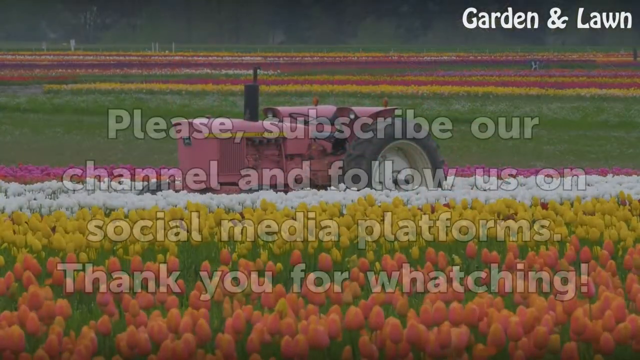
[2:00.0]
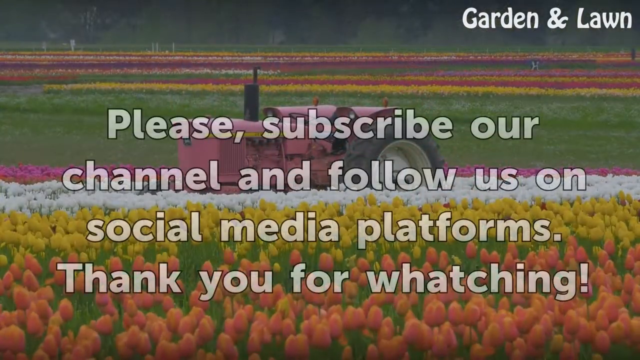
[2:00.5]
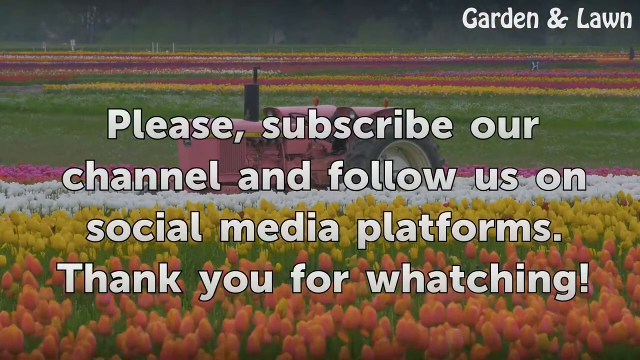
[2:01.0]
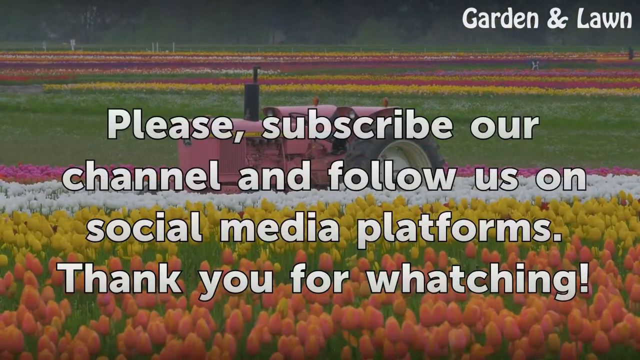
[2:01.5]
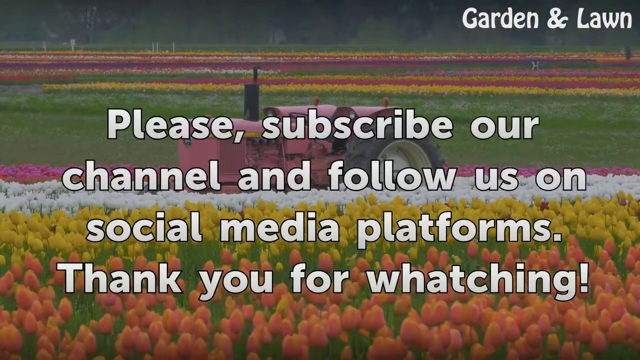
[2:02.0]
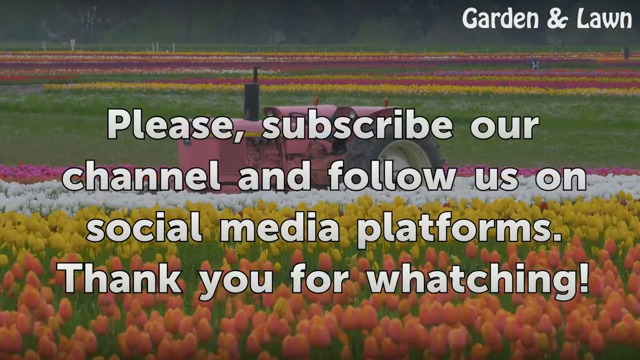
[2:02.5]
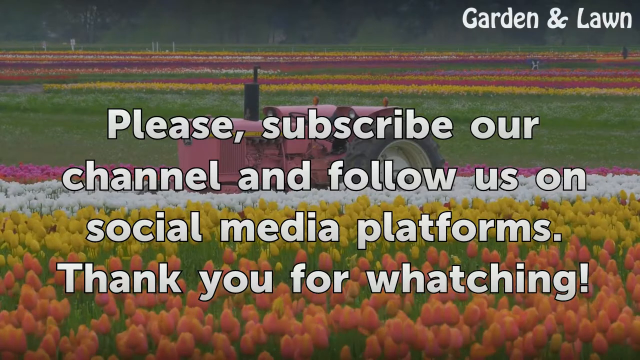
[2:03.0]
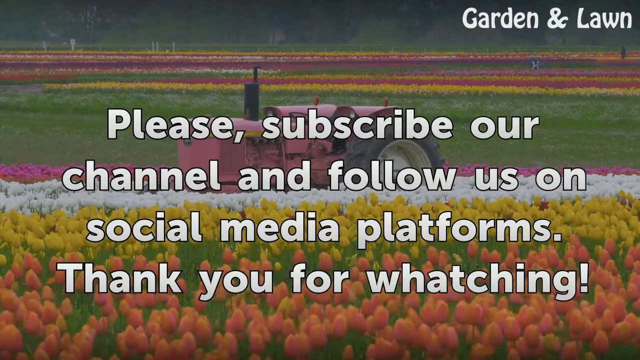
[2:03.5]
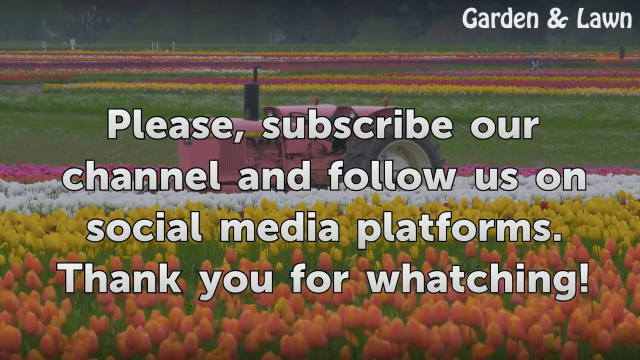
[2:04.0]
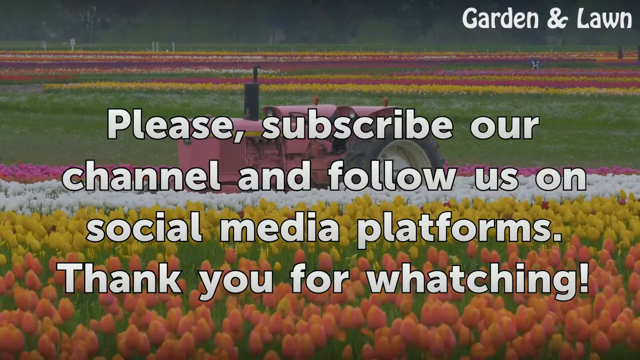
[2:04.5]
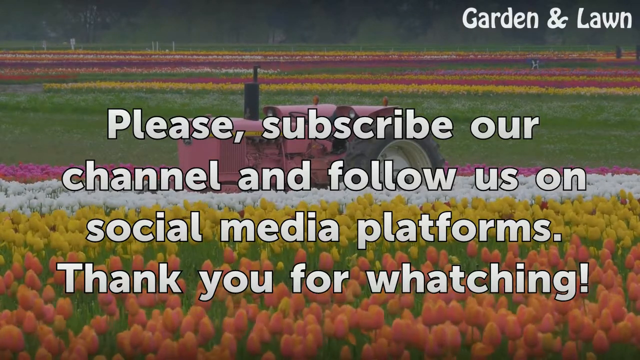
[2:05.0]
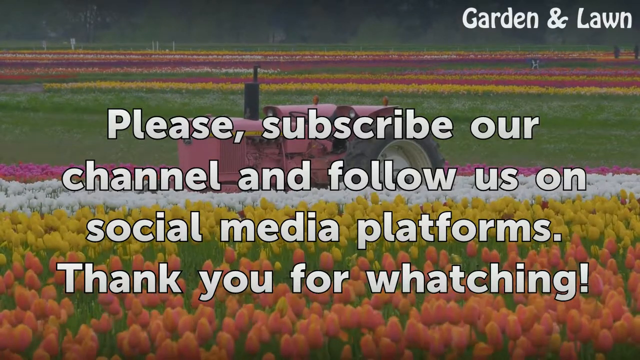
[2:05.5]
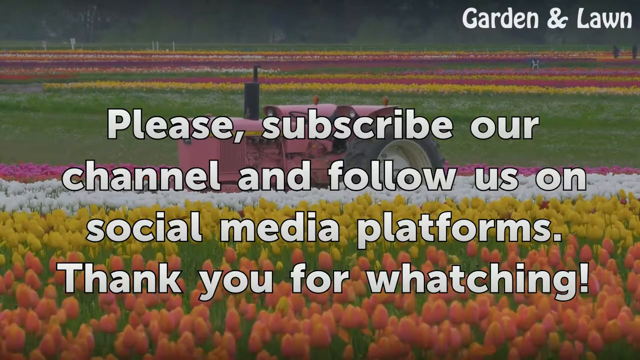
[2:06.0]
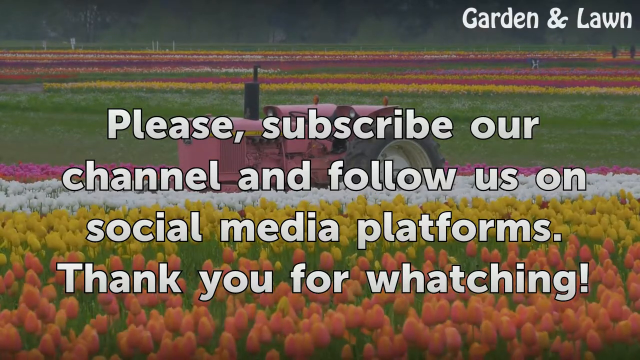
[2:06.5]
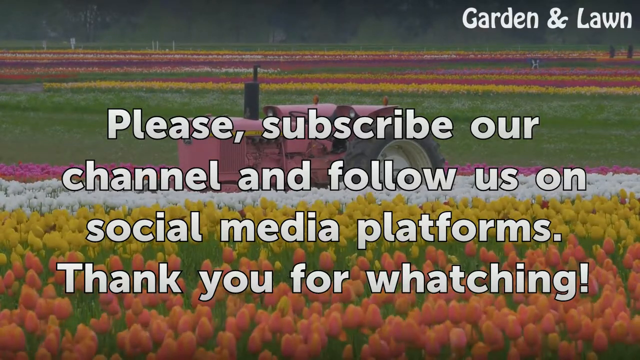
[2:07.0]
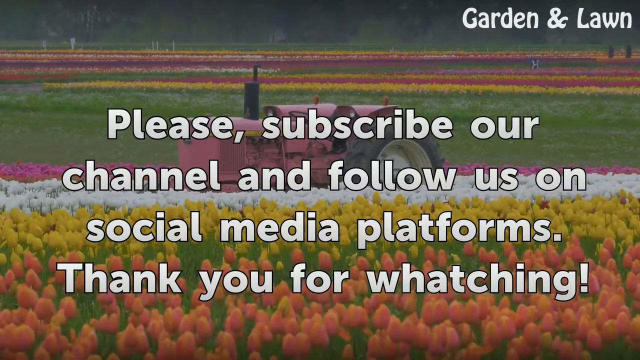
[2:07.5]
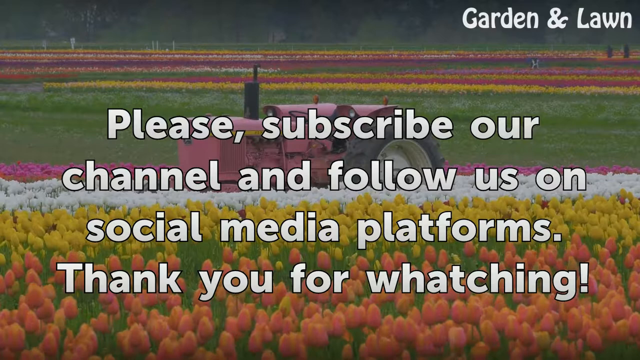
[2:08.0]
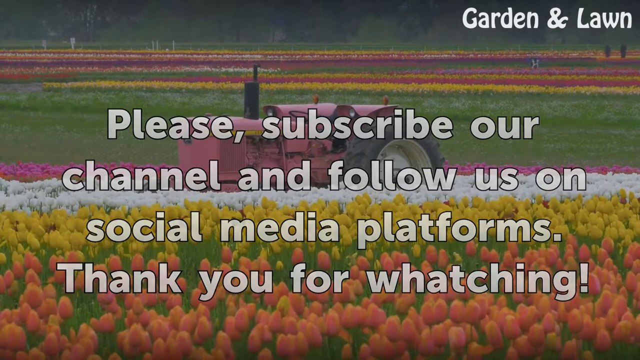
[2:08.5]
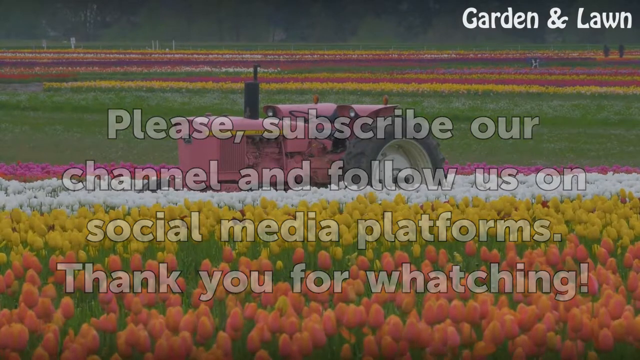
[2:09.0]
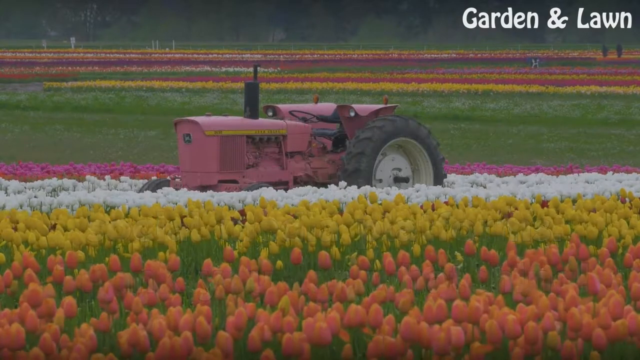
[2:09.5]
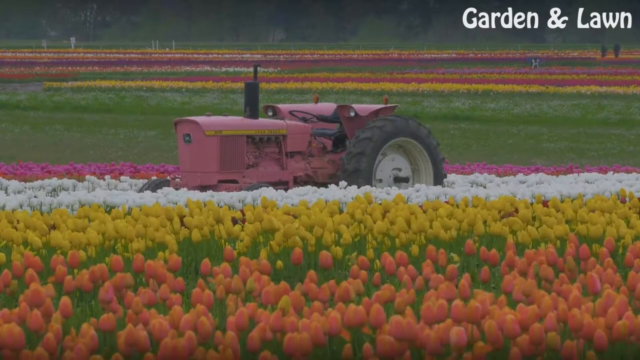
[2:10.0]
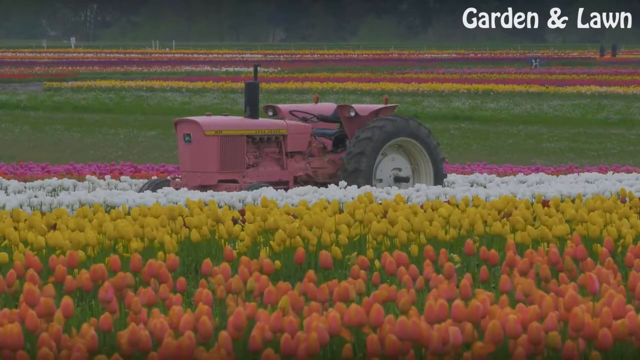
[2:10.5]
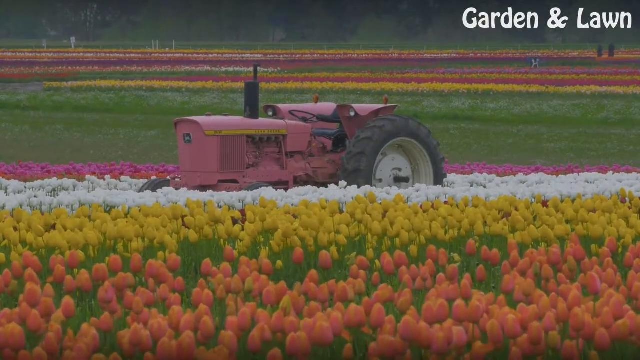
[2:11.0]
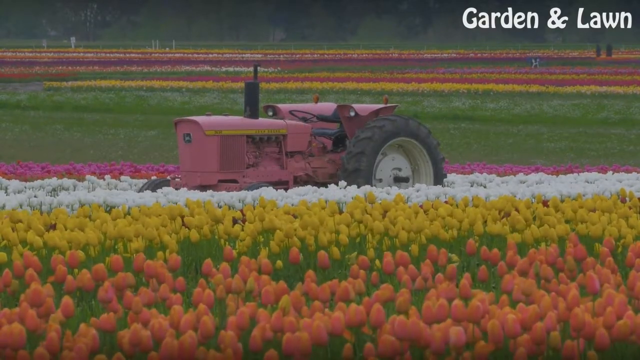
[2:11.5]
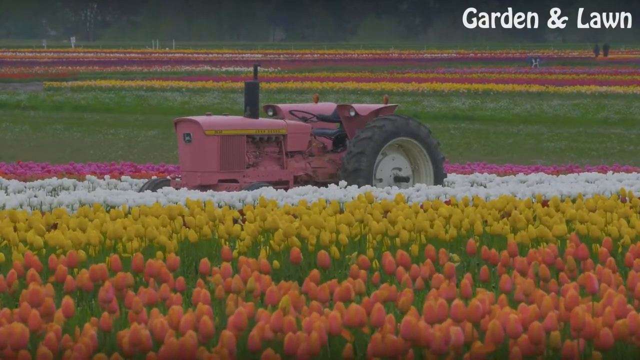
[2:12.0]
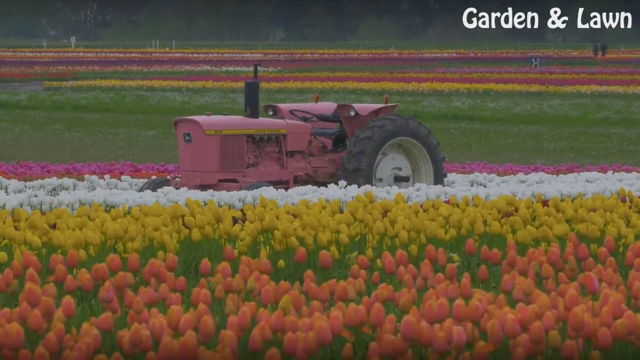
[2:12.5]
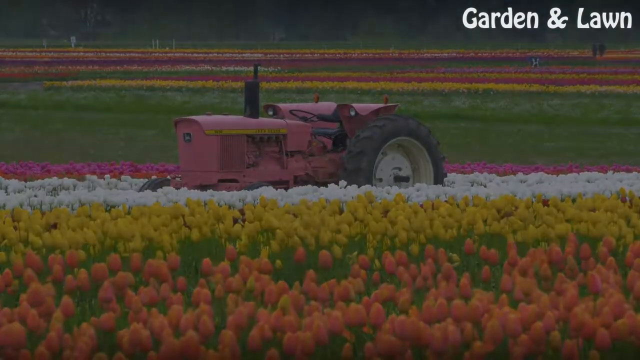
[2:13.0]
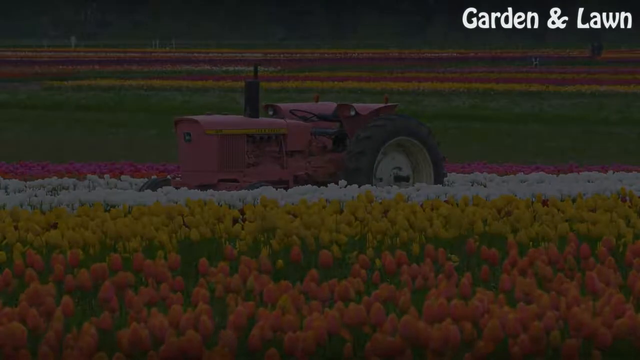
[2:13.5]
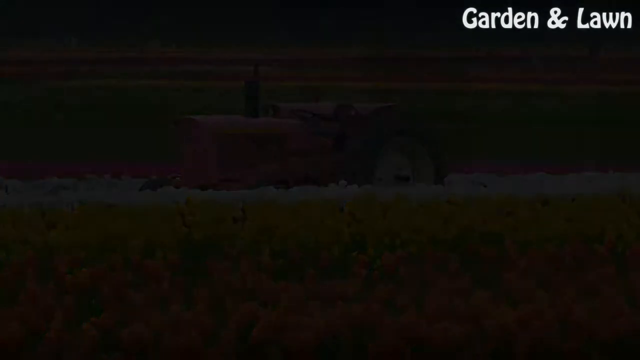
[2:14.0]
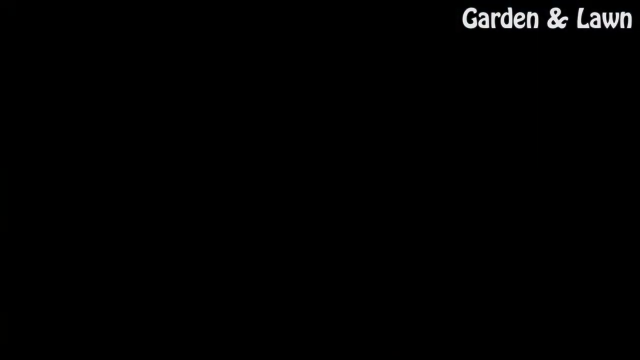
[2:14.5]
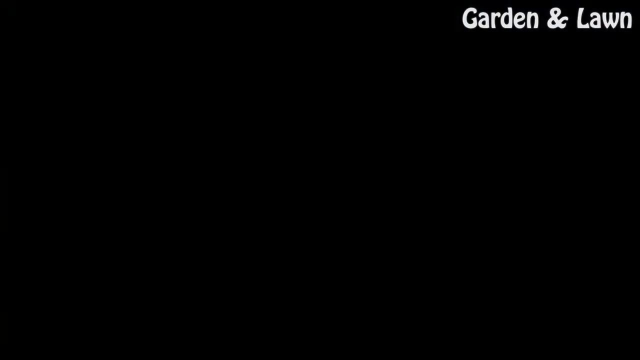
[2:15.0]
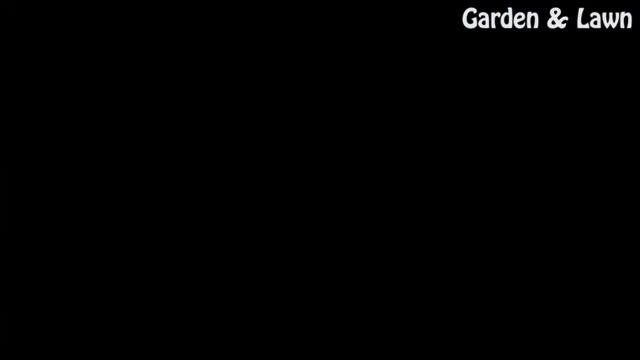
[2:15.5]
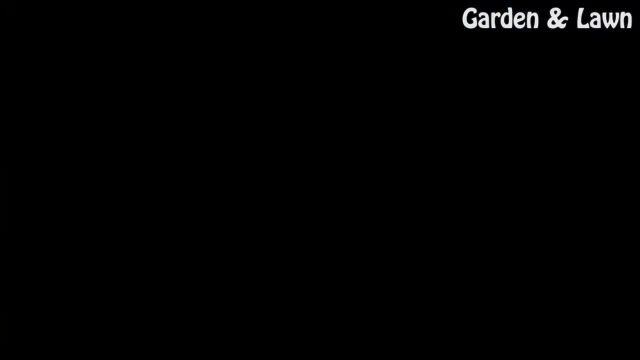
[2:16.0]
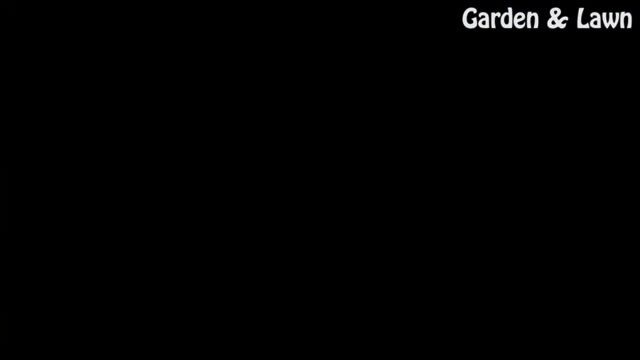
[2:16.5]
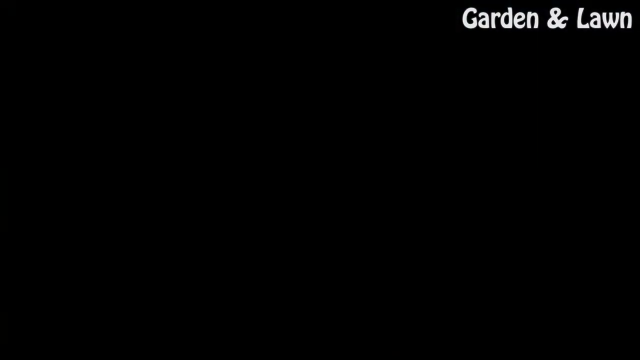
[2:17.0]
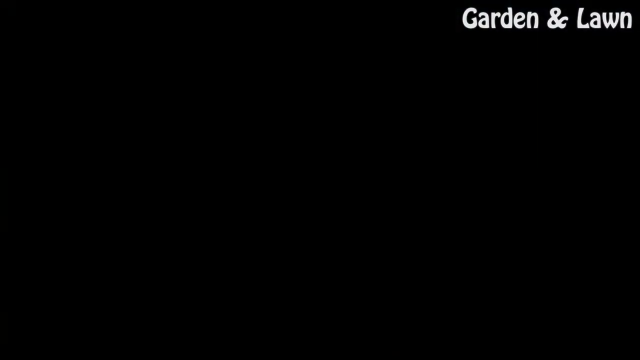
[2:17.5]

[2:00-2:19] The video fades into a faraway overview of a variety of tulips: yellow, white, pink, and orange, with green grass in the middle between them and more tulips on the other side. A tractor is in the middle of the tulip field, apparently in a farm area. Text then reads: "please subscribe our channel and follow us on social media platforms. Thank you for watching." The image slowly fades away with a closing transition effect, and the screen goes black.